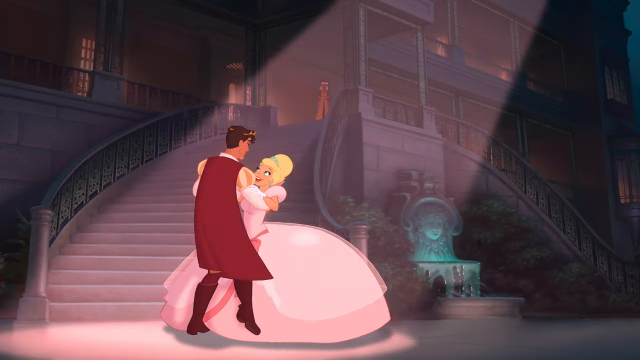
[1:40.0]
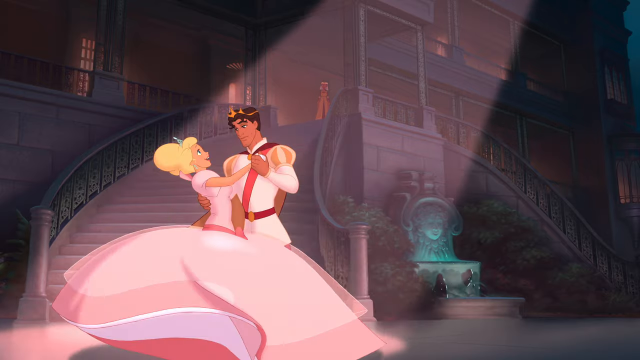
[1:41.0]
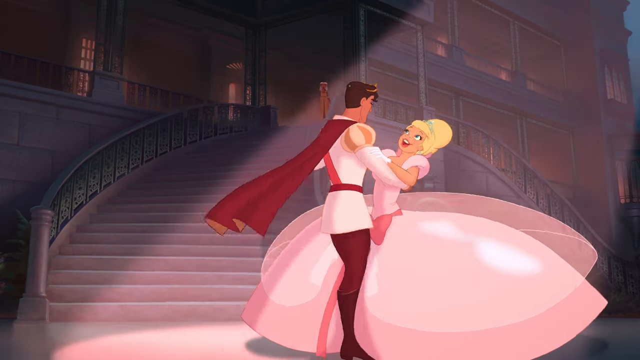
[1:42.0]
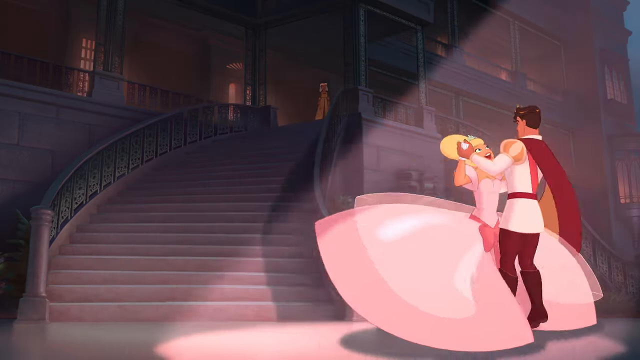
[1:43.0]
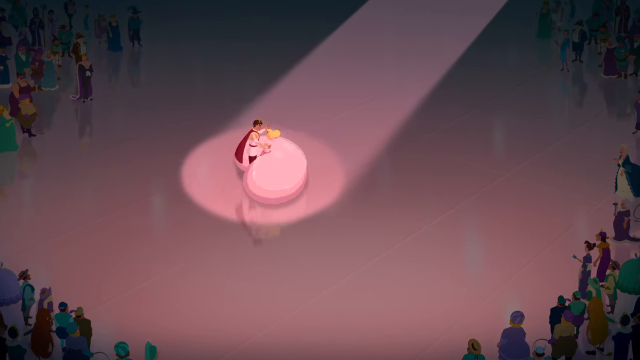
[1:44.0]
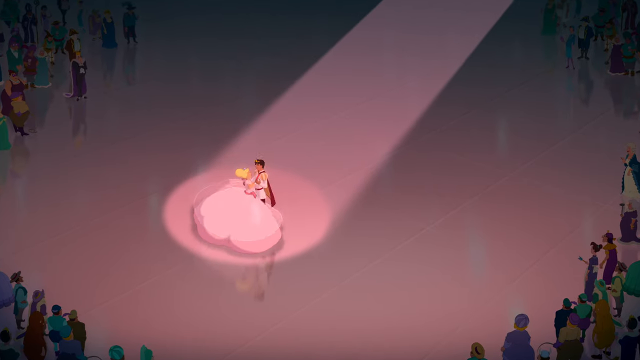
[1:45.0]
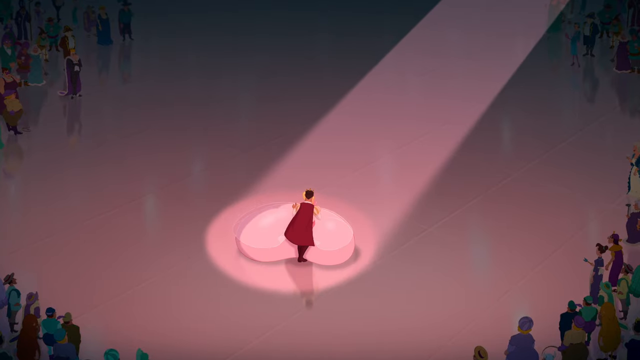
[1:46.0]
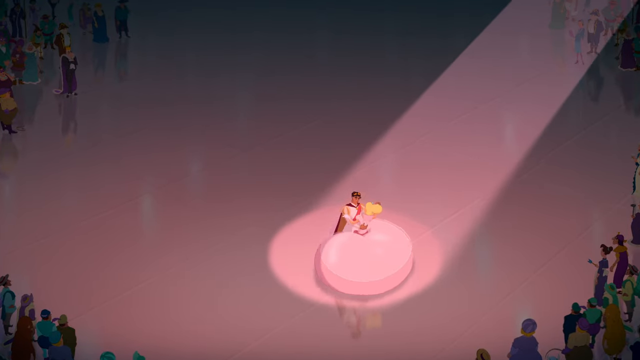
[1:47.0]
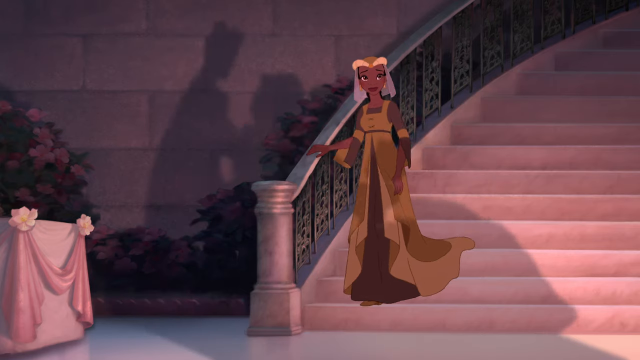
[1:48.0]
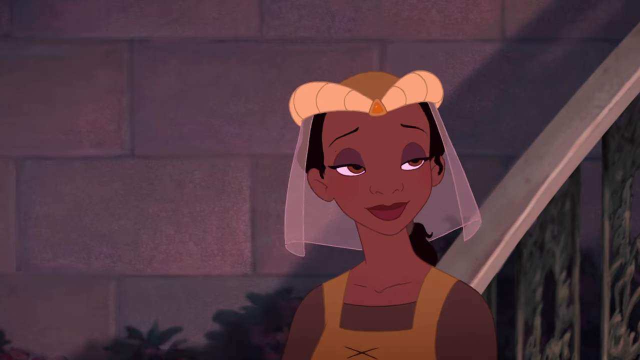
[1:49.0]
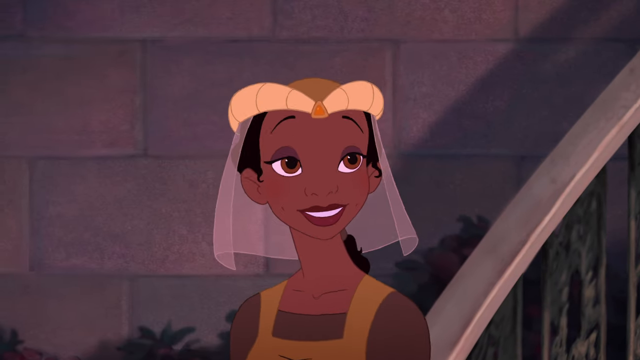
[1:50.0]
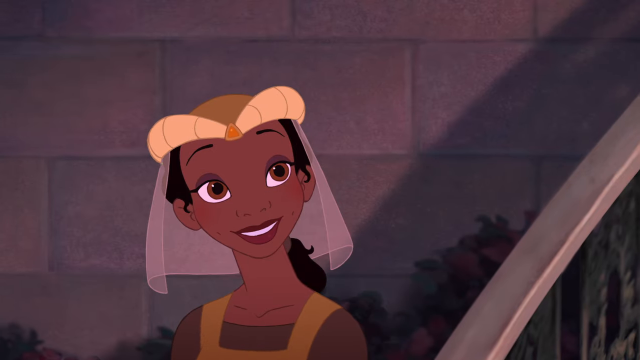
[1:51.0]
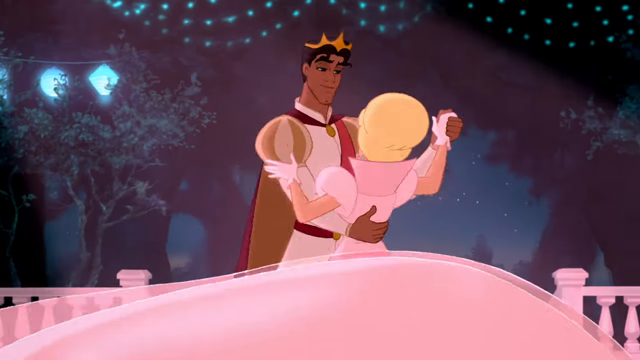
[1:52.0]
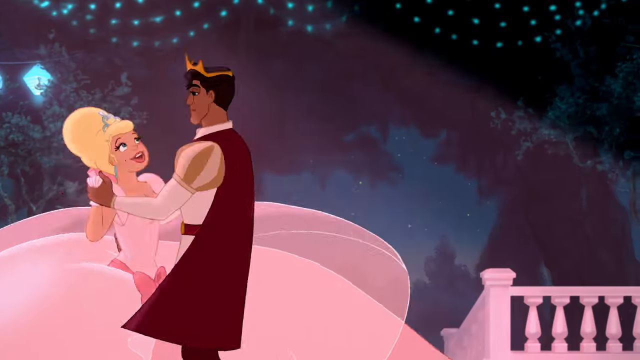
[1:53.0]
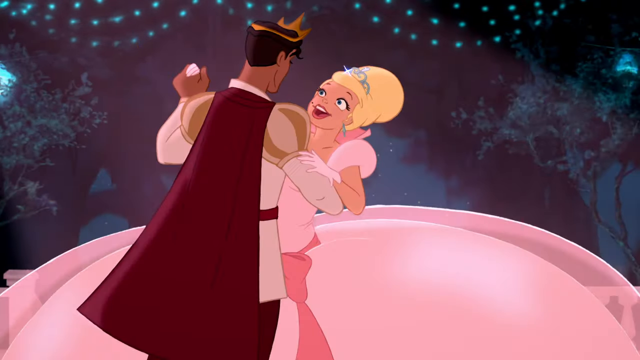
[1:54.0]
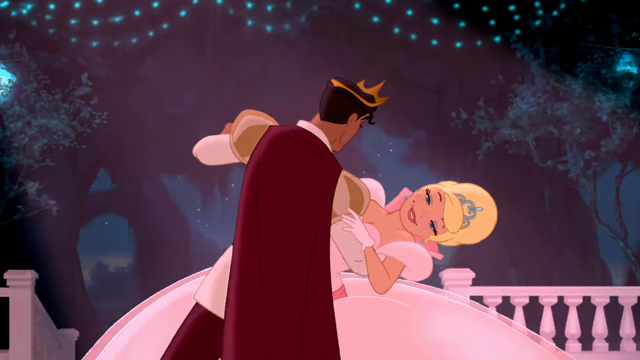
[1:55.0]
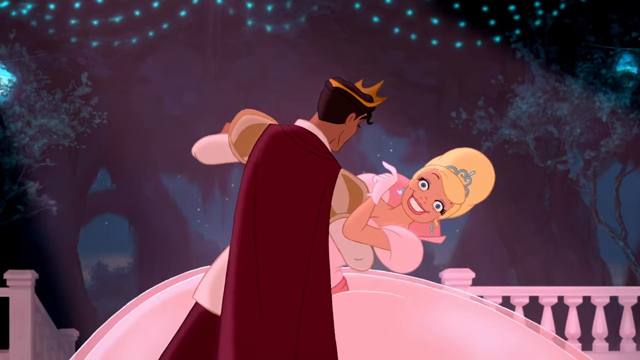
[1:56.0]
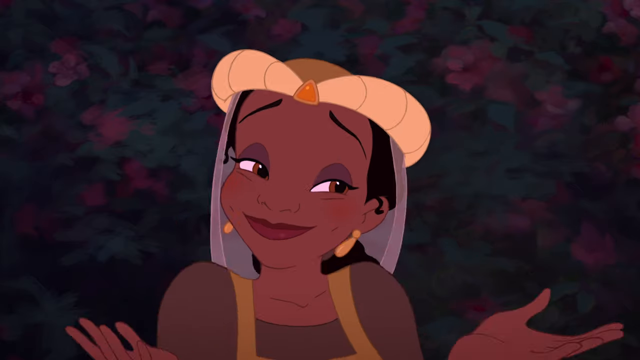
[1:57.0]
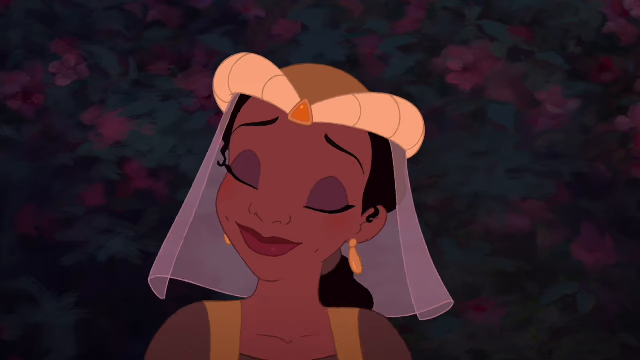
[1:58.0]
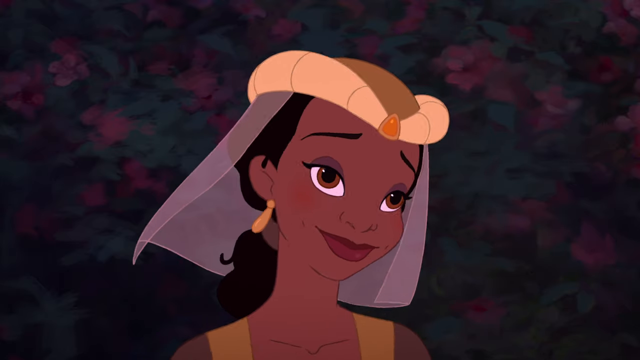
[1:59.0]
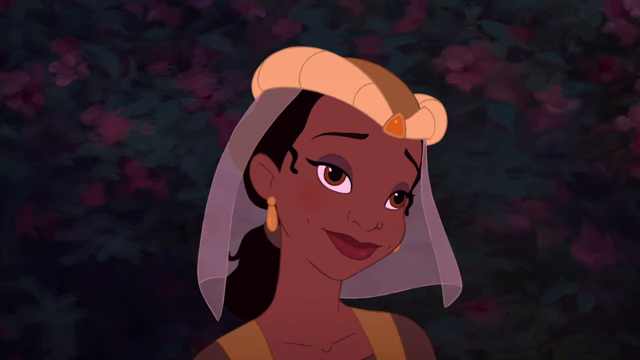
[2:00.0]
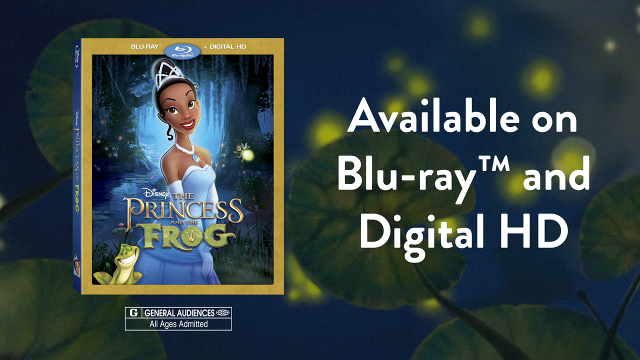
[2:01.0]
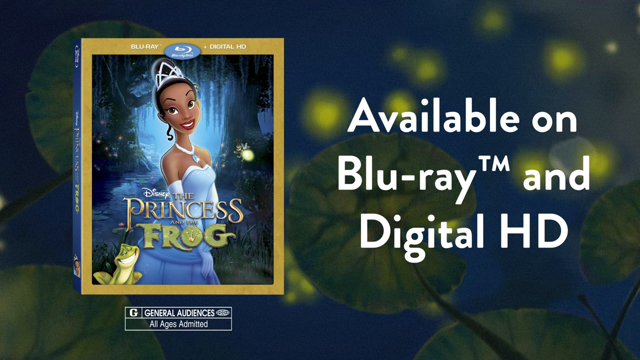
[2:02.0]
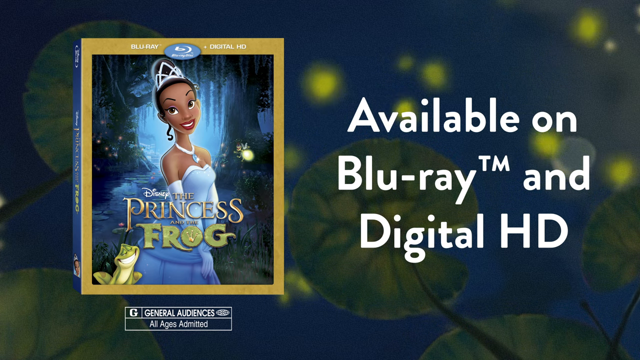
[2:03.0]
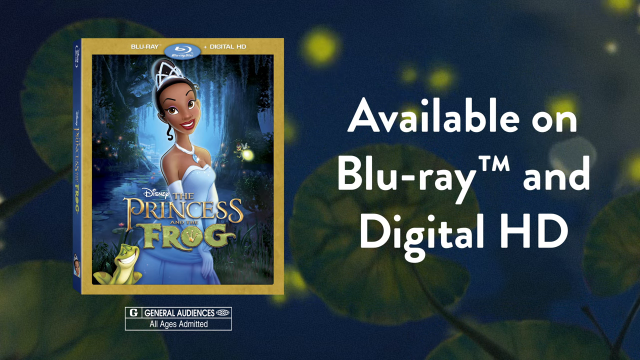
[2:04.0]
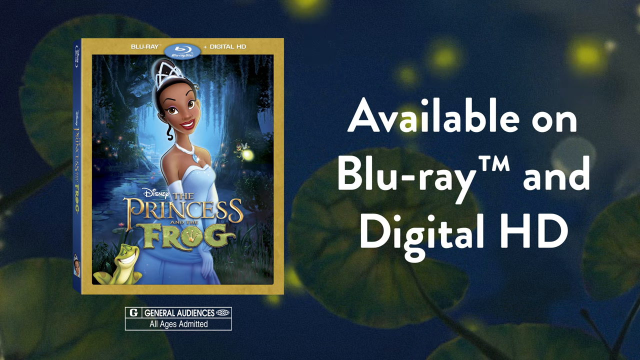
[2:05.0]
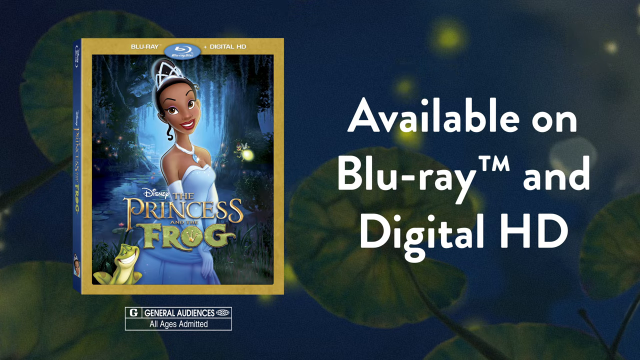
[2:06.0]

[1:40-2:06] The woman in the pink ball gown dances with the prince in the red cape, and the spotlight follows them around the dance floor. Every time they spin, the woman can be seen smiling, deliriously happy. The dark-haired woman from the snack table walks very calmly down the stairs and gives them a half-lidded smile. She wears some sort of very plain headdress, with something like a veil hanging behind it to cover her hair, which is gathered back in a dark ponytail. The prince, who has dark black hair and dark brown skin and wears some sort of crown, continues to dance with the blonde-haired woman. When the blonde woman sees her friend on the stairs, she smiles and points to the prince where he can't see it, as if to say, look what's happening to me. Her friend on the stairs smiles, shrugs her shoulders and raises her hands, as if to say she doesn't know what happened, and looks very pleased for her. The scene then fades to an image of Disney's Princess and the Frog with the text "available on Blu-ray and digital HD."